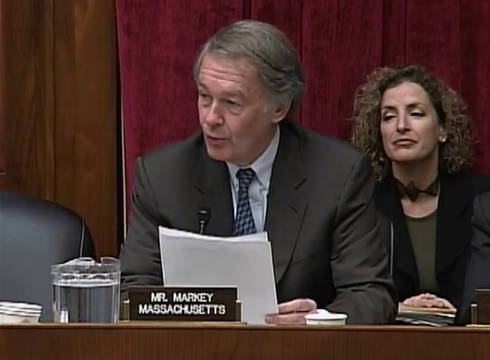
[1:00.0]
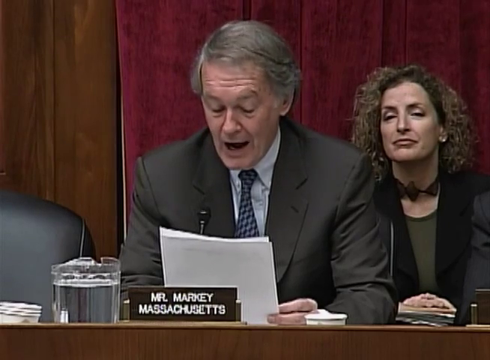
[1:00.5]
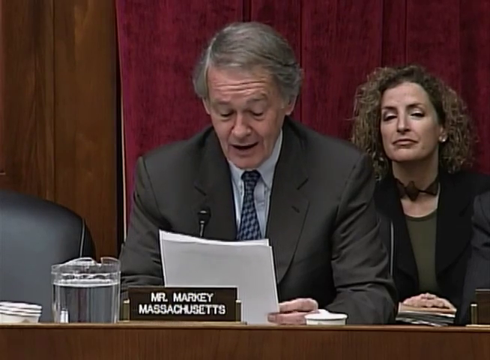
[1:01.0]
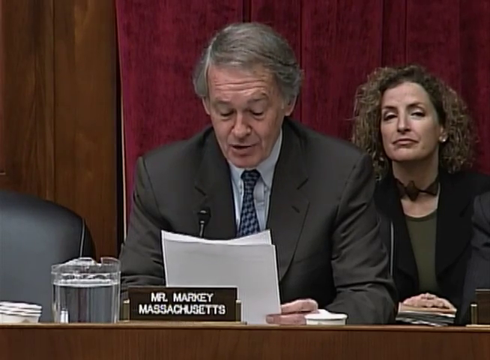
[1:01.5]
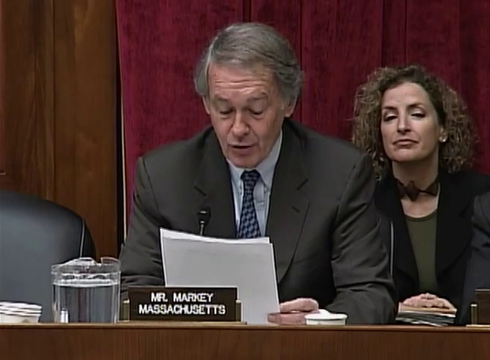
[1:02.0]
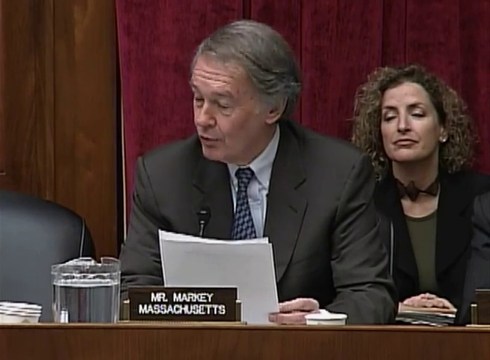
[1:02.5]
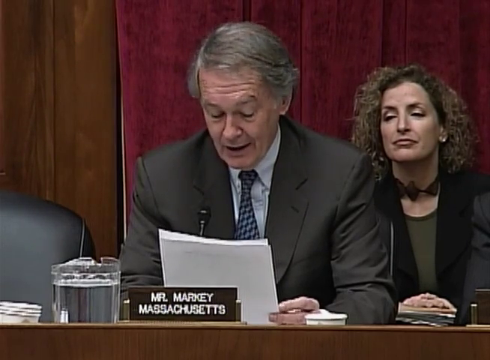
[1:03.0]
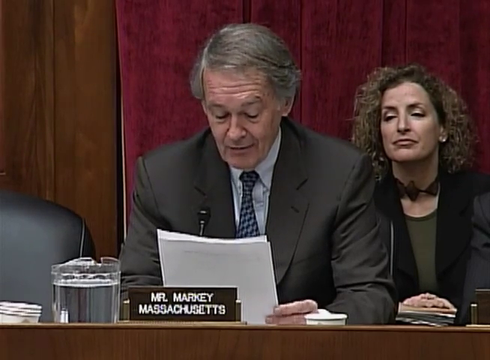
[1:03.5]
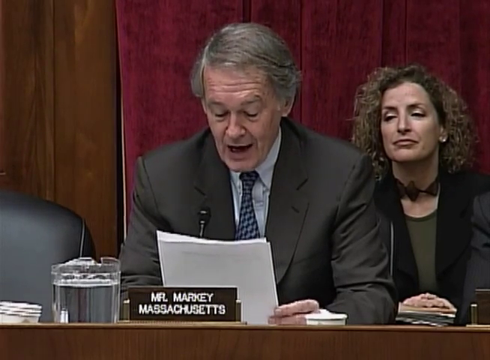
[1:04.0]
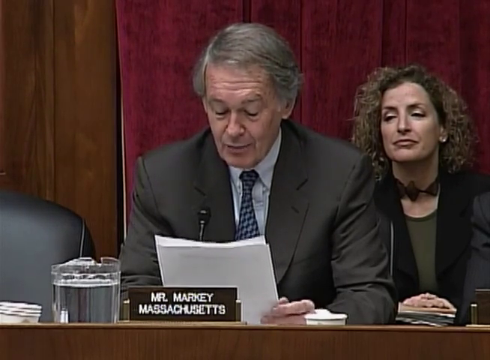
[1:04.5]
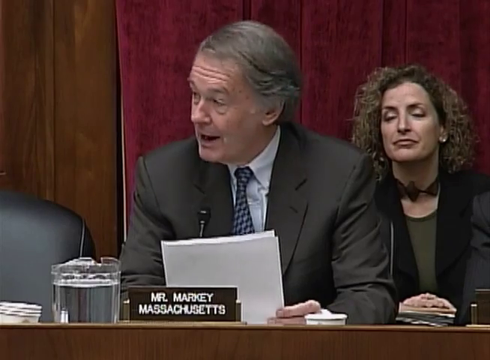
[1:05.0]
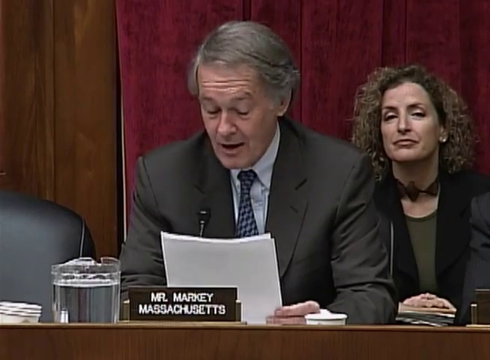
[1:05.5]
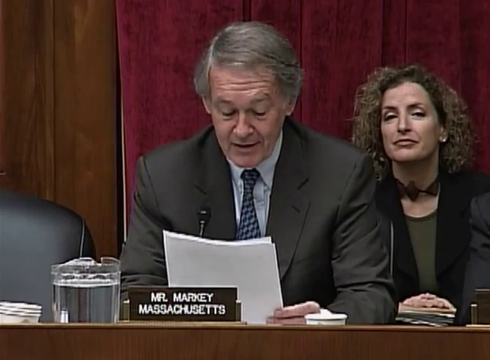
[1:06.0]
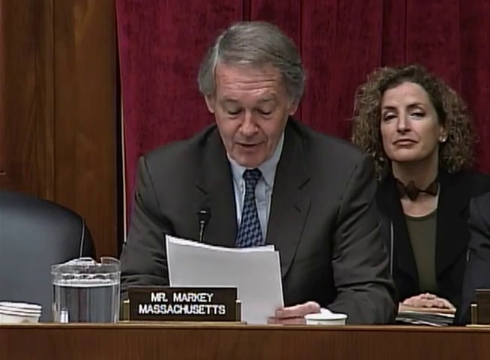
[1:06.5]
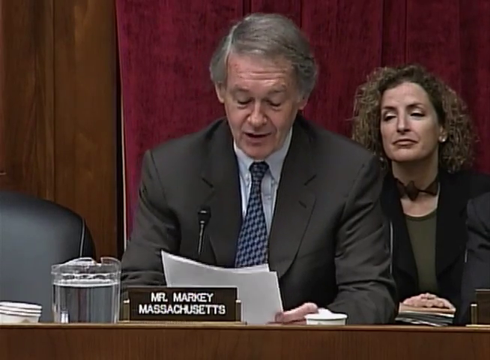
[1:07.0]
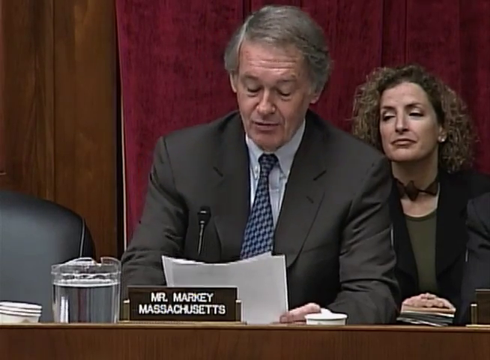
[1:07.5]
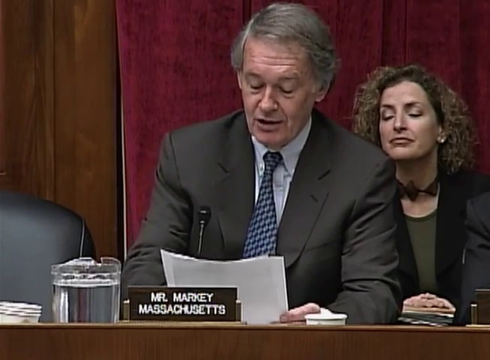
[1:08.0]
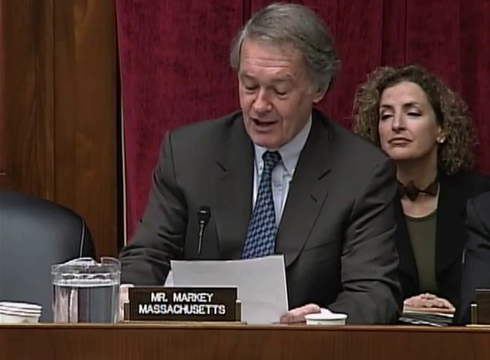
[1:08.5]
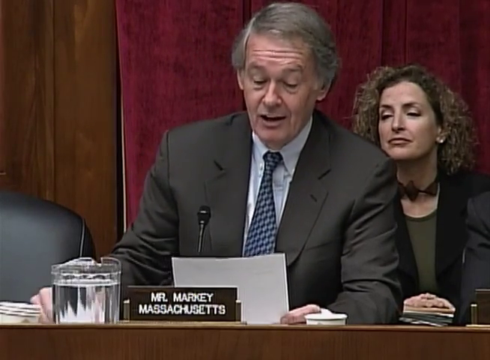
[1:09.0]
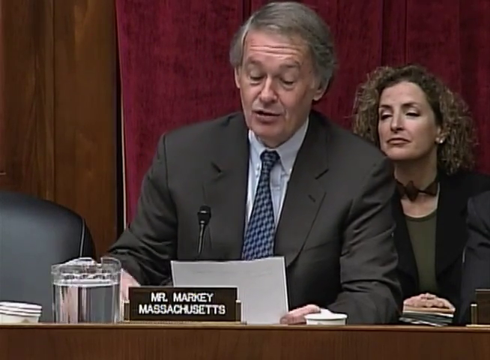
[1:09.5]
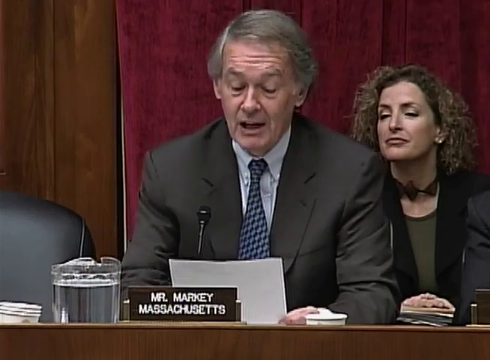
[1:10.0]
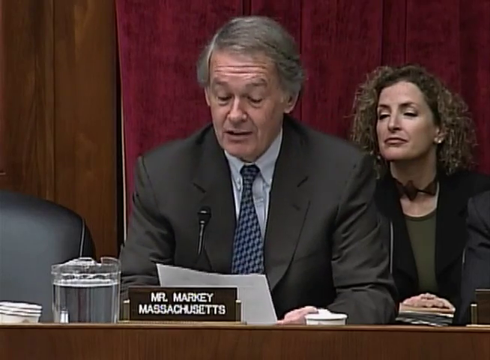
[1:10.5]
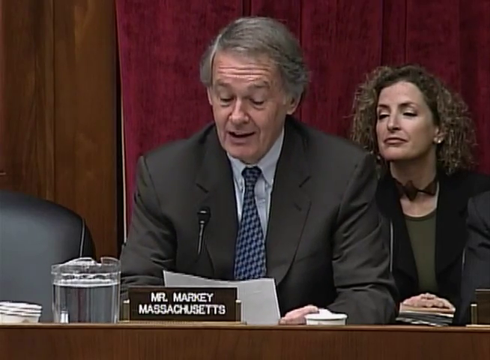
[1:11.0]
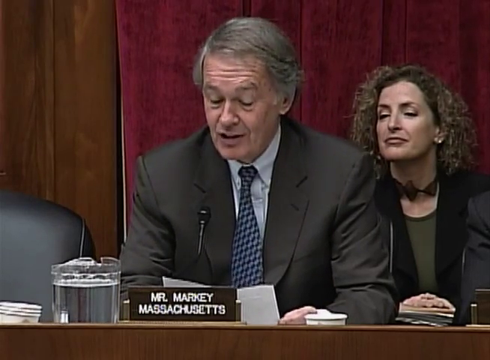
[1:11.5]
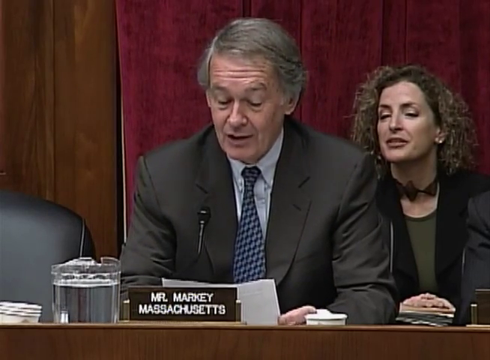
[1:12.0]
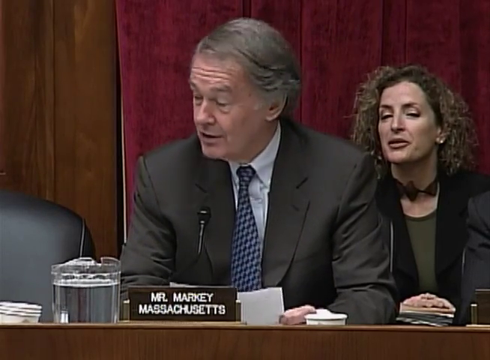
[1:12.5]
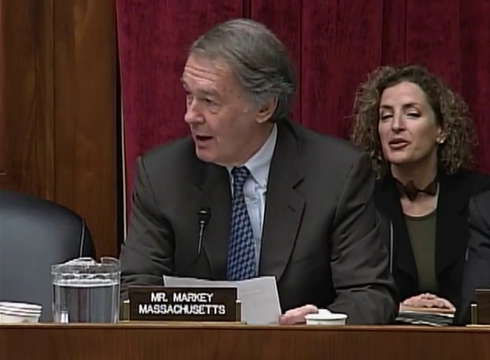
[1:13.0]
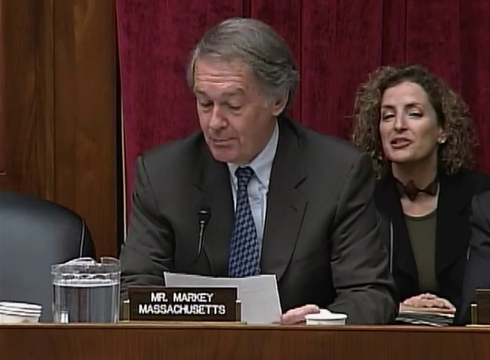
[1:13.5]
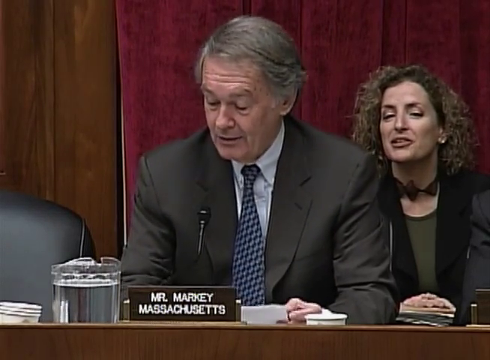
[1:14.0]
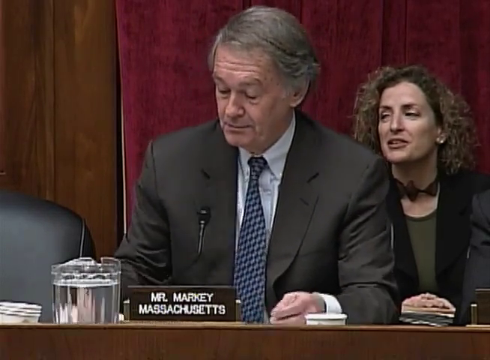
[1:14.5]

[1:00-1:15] A man has papers in front of him and moves them around, with a microphone in front of him. A pitcher of water in front of him is filled to the brim. Behind the man, the woman moves her fingers and turns her head. Her necklace has multiple triangles, apparently three. She turns her head slightly to the right. The man is apparently sitting down to make a statement.